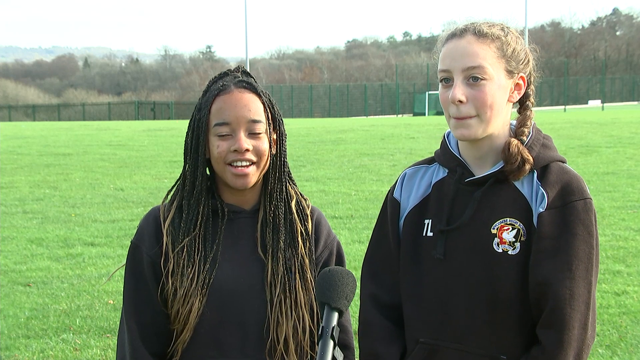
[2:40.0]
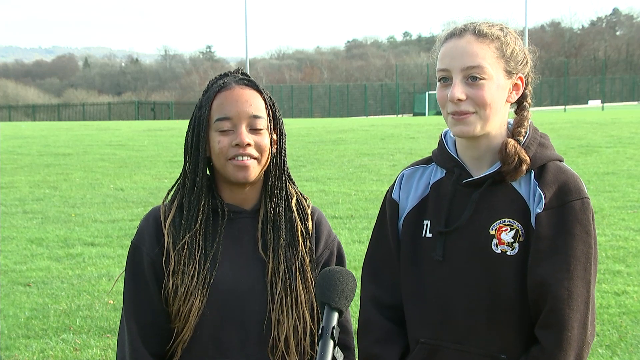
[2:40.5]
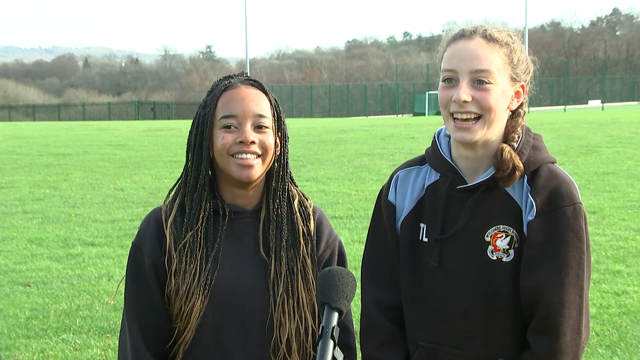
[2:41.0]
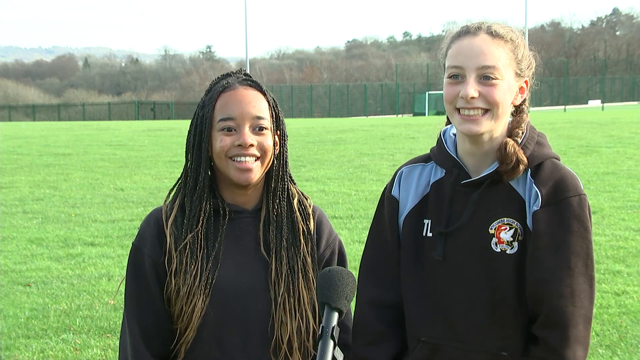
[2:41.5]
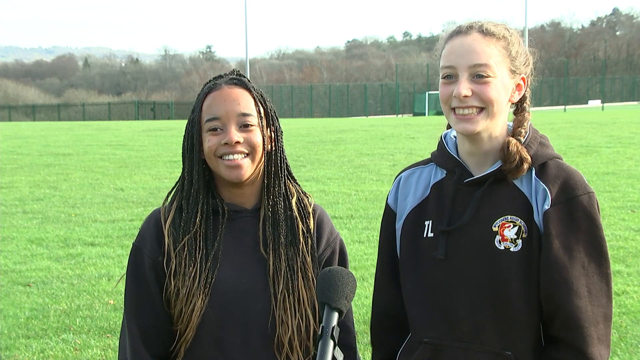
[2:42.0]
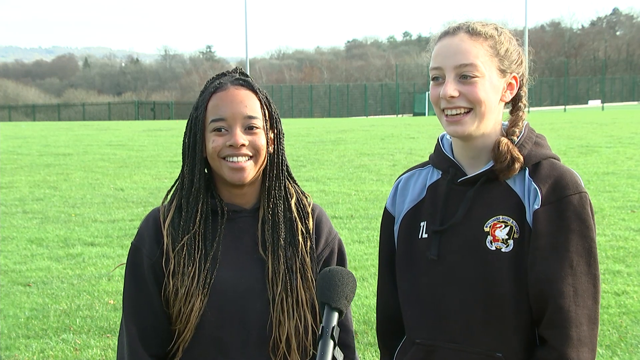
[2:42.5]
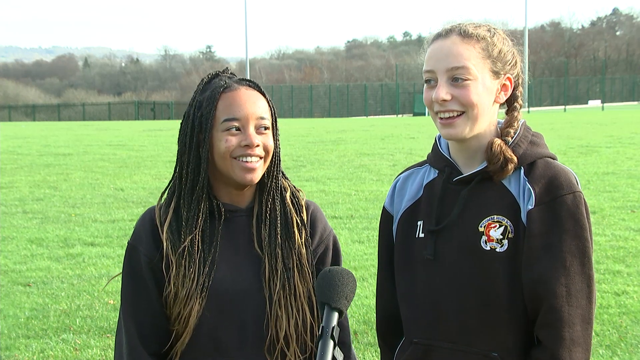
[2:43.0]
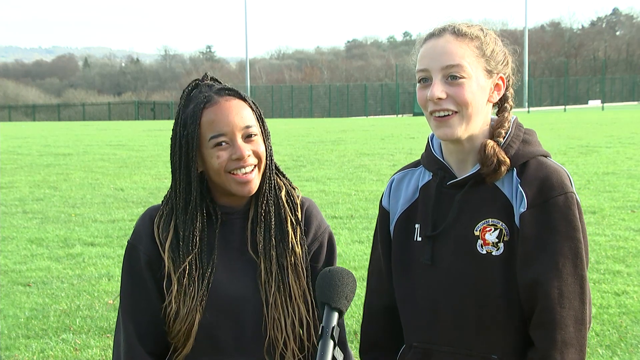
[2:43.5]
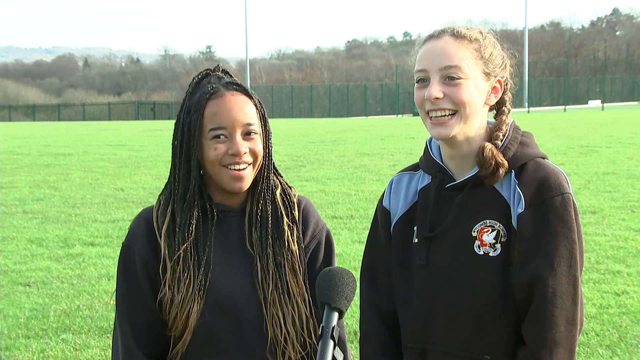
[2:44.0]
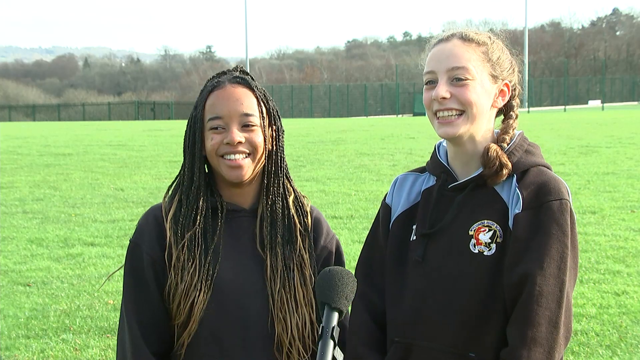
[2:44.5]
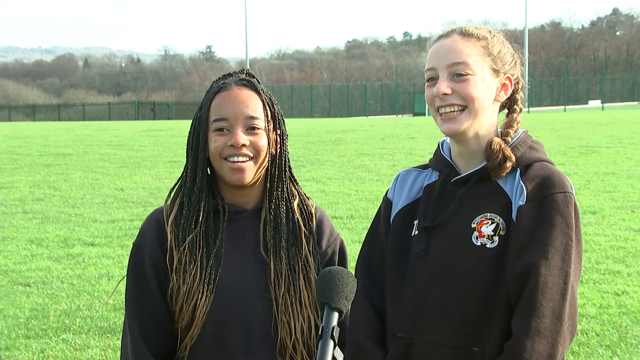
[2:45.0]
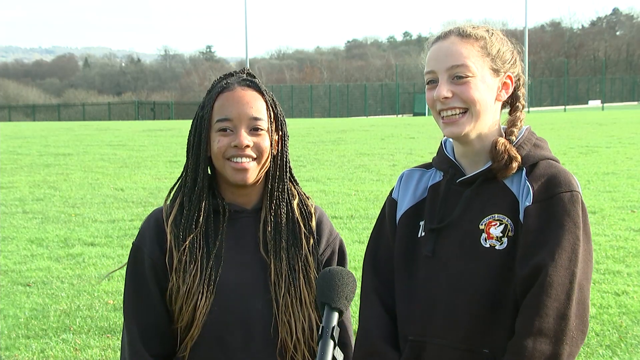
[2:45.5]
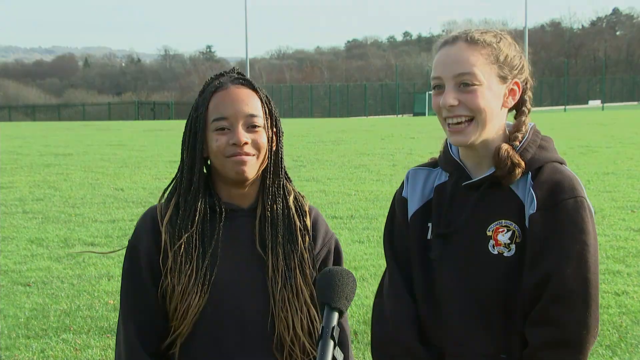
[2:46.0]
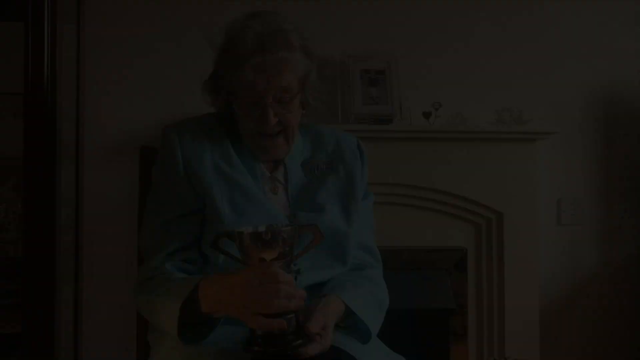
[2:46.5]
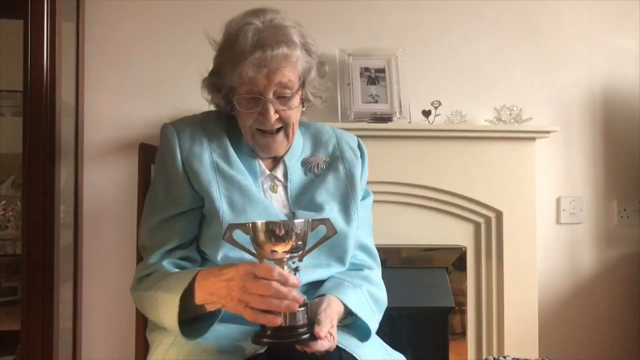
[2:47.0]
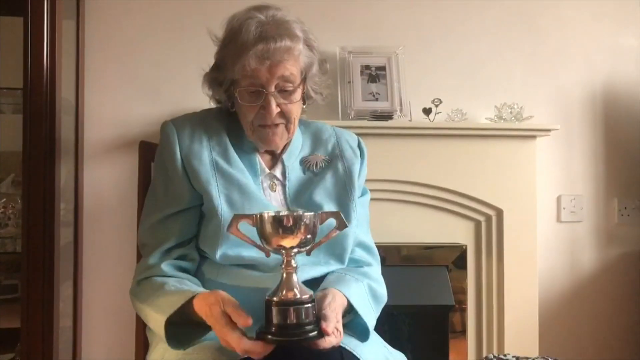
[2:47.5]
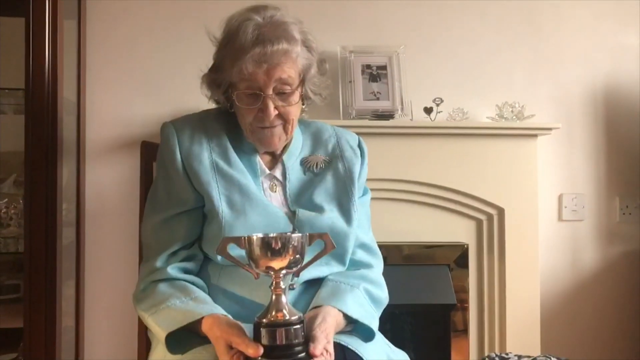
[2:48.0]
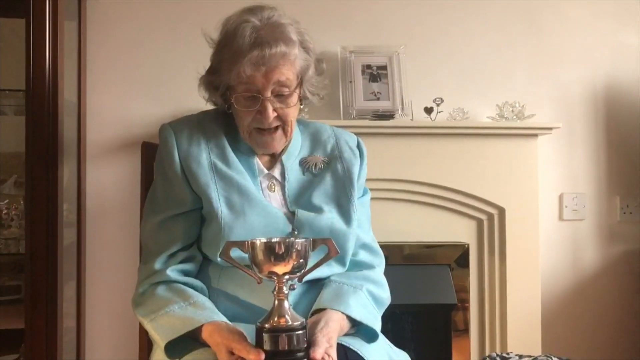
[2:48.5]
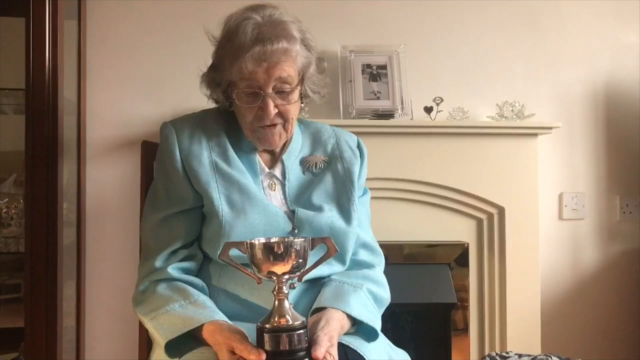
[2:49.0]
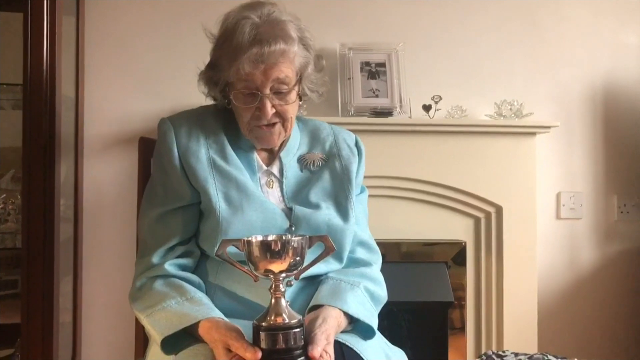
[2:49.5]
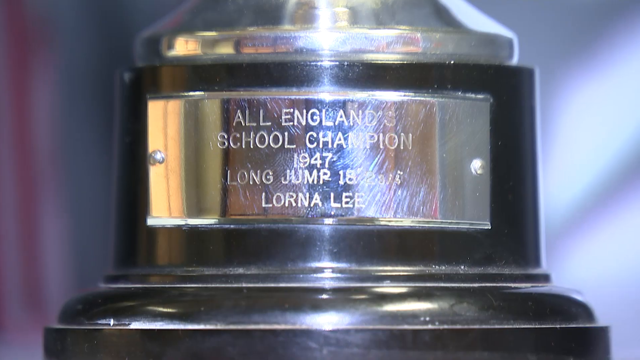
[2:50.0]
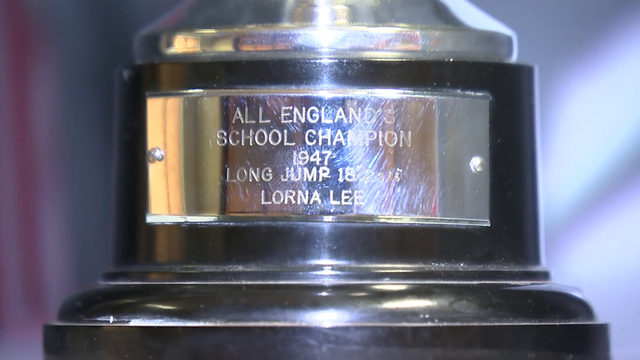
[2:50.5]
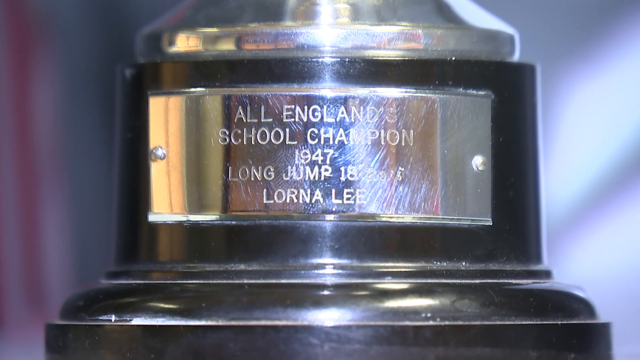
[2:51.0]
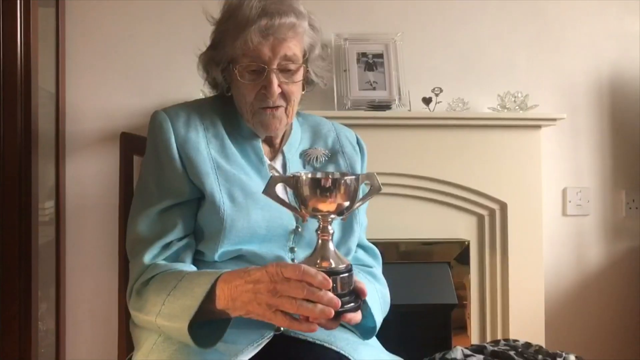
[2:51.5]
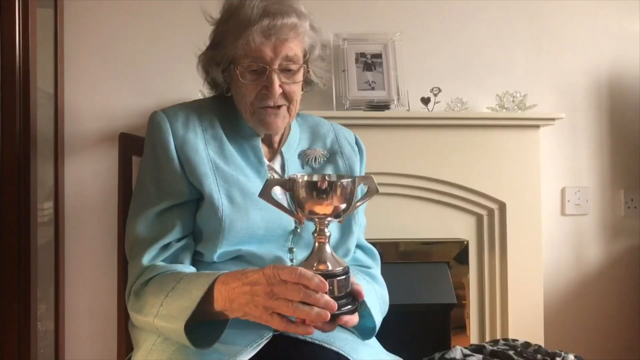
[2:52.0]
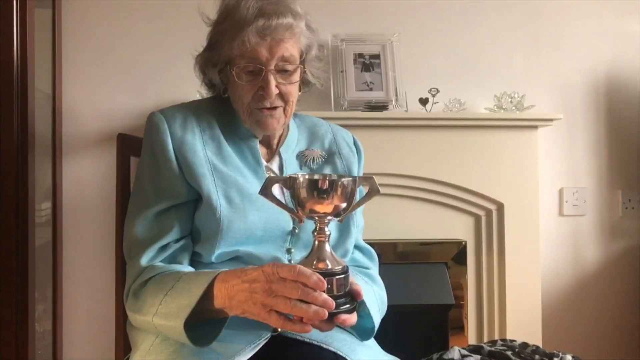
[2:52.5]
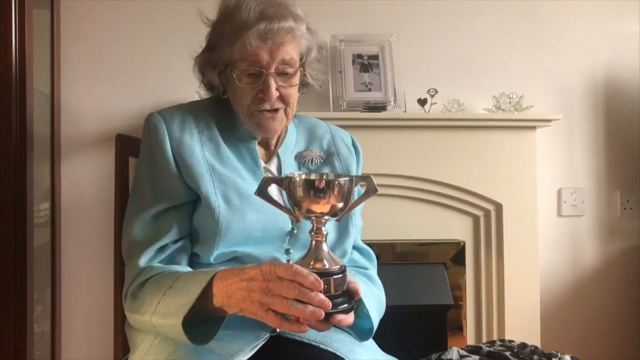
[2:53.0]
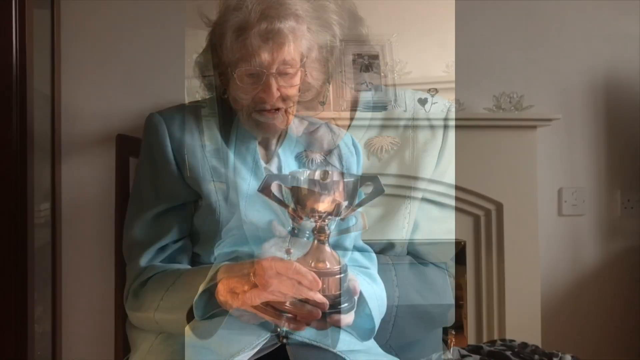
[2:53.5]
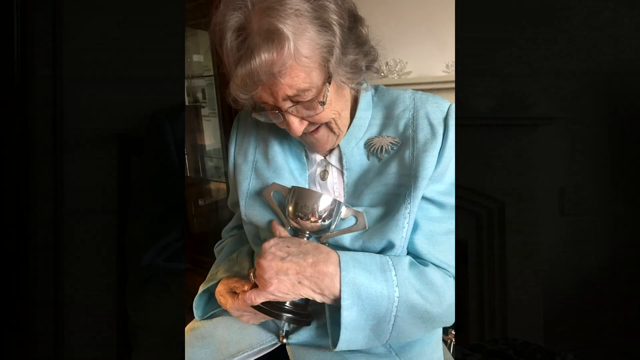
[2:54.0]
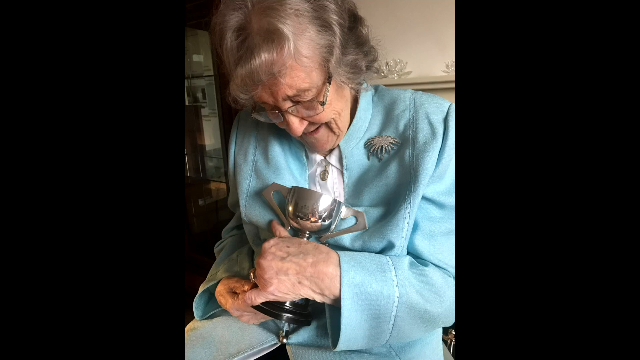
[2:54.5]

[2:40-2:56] Two young girls, one African American and one Caucasian, are interviewed on the field. There are a lot of trees in the background and a green fence around the perimeter, and it is a sunny day. The girls smile and laugh at the reporter, and a black microphone is in the middle of them. Then the older woman in the light blue suit holds a silver cup, apparently one she won decades ago, and stares at it, looking very happy. Text reads "All England school champion, 1947, long jump, 18 feet, Lorna Lee."